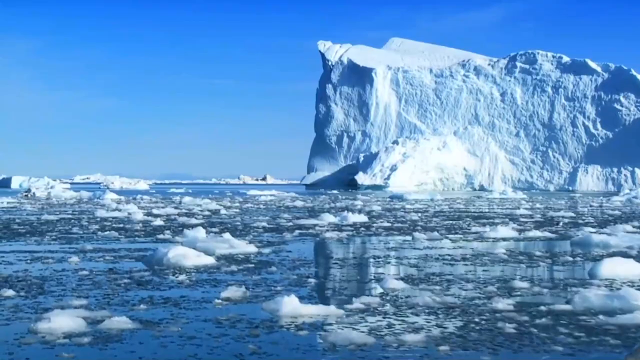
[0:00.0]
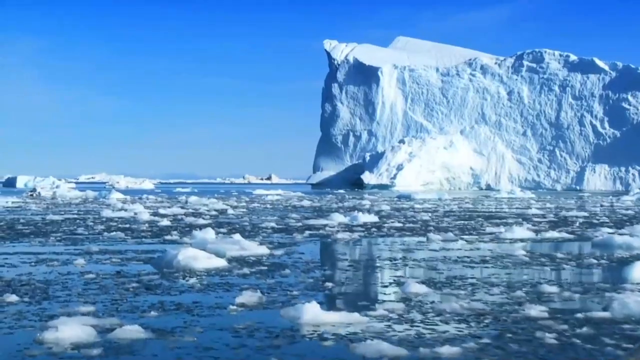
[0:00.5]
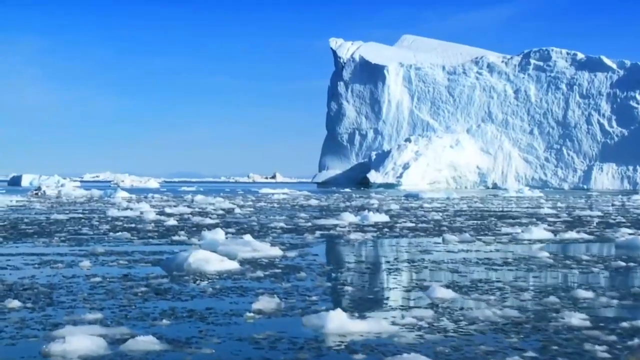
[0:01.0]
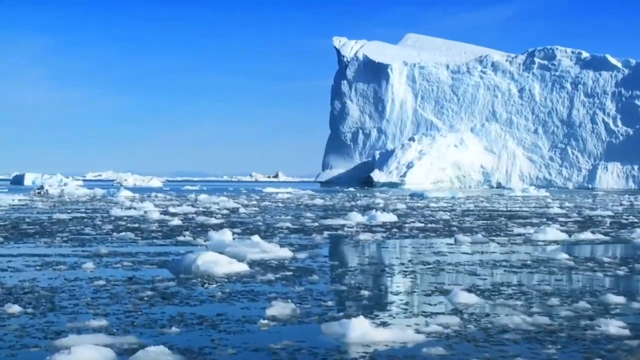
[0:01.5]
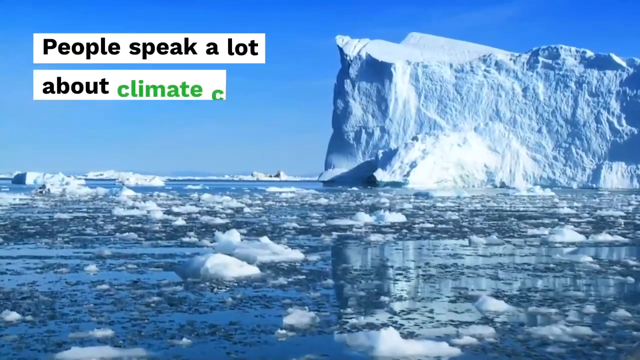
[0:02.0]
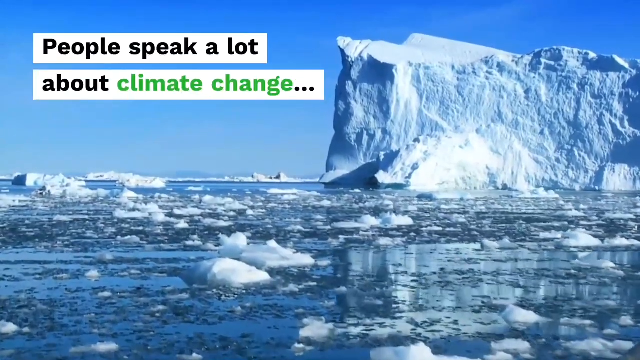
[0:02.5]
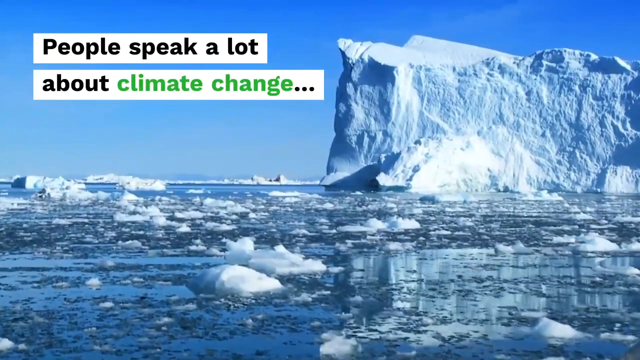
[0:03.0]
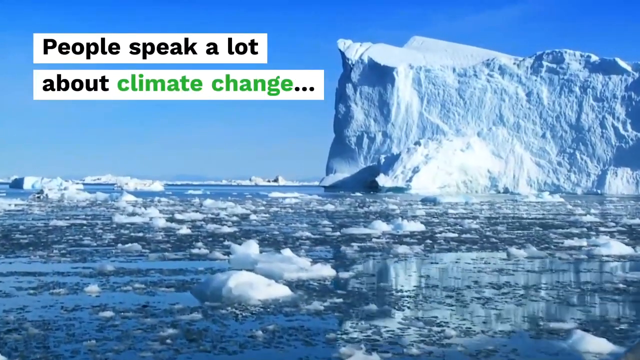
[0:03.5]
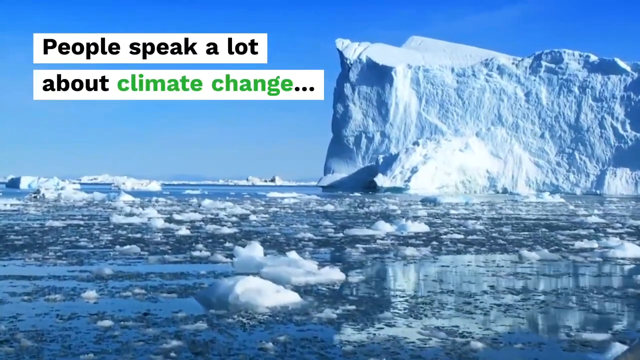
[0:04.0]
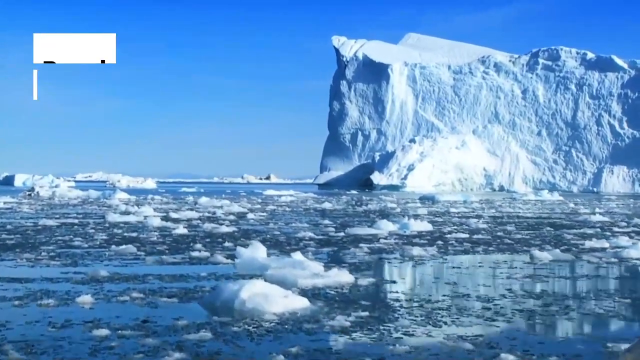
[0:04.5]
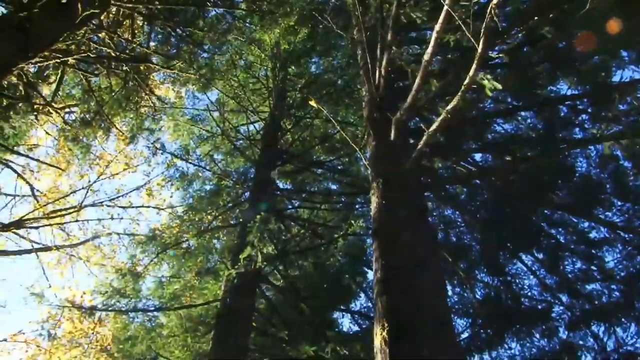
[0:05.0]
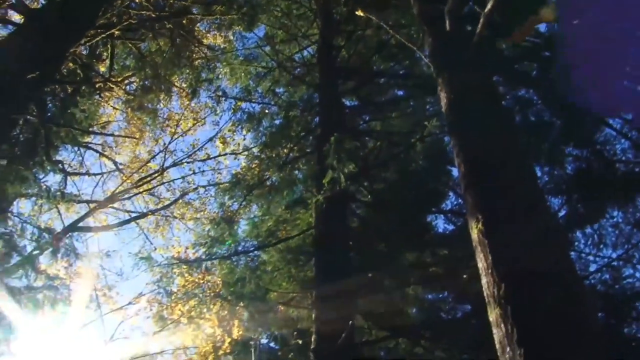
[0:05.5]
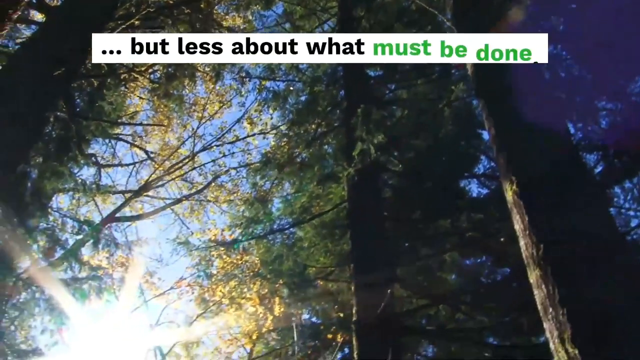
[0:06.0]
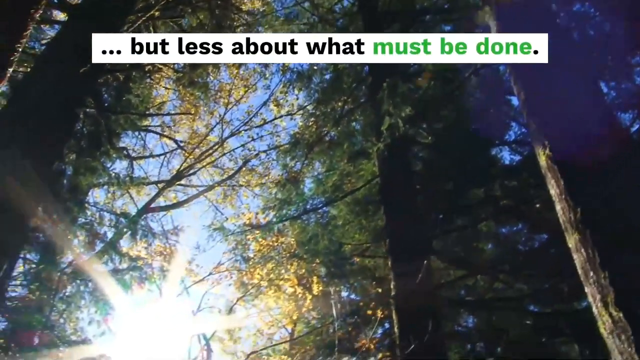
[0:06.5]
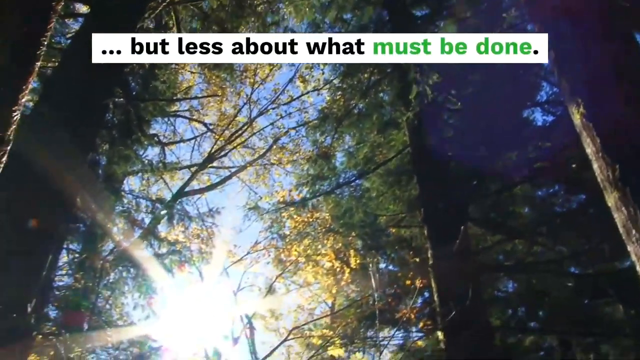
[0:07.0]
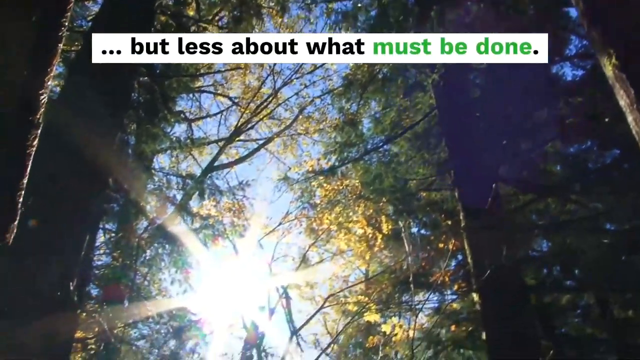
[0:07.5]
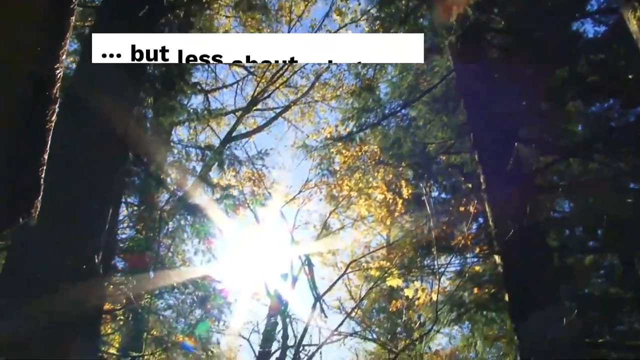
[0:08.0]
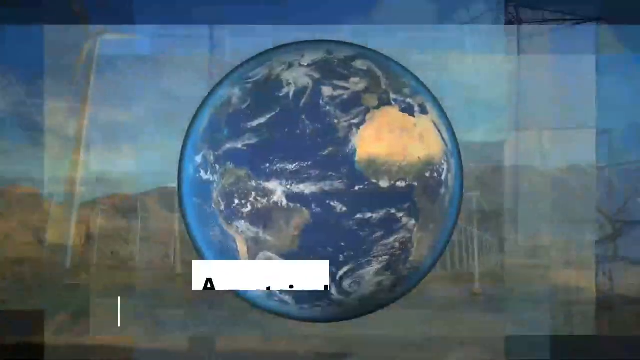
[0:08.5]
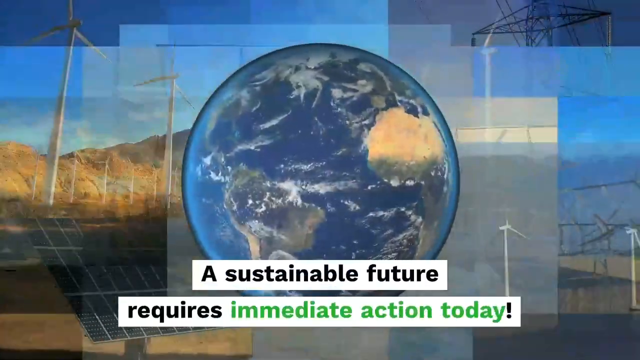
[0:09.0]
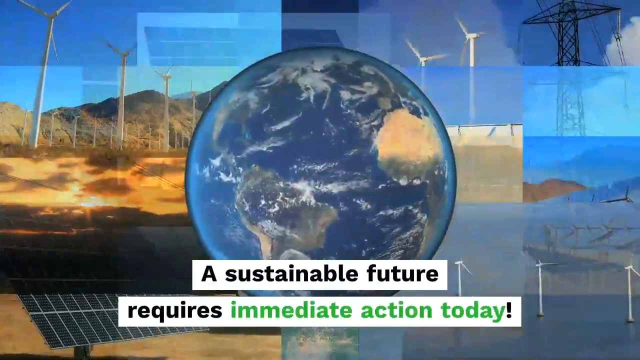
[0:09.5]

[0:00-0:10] The scene opens on a sea and shore, with a lot of ice blocks on the sea. Text appears reading "people speak a lot about climate change". Another video follows showing a lot of trees, and the text continues: "but less about what must be done". A globe is then shown with the writing "a sustainable future requires immediate action today". The sky is clear. On the far end there is a huge block of ice, white in color. The water seems to be dirty, possibly due to climate change.